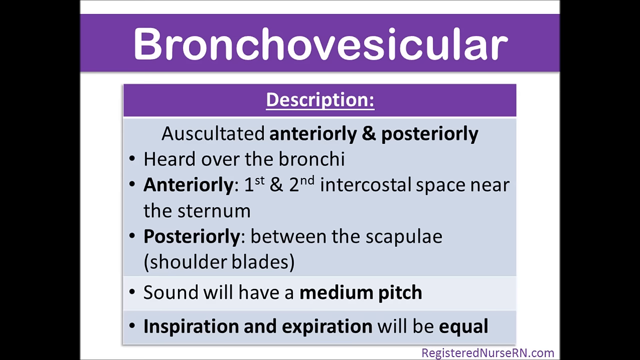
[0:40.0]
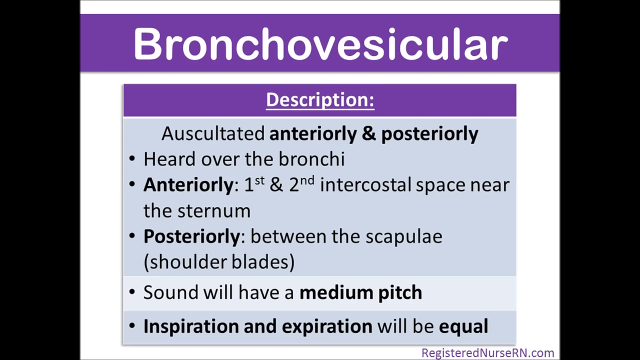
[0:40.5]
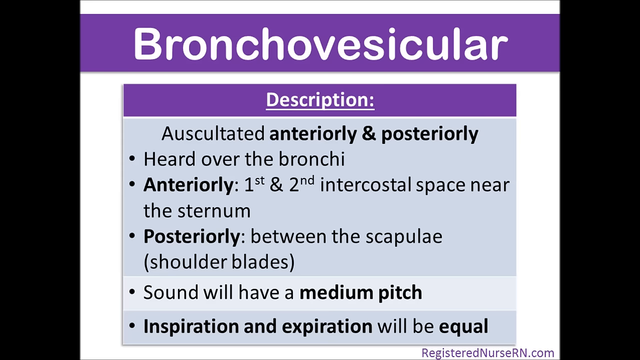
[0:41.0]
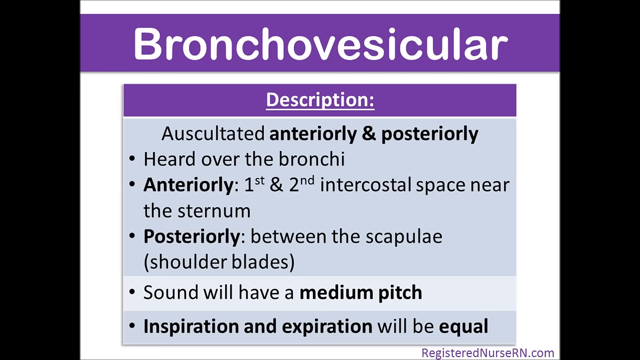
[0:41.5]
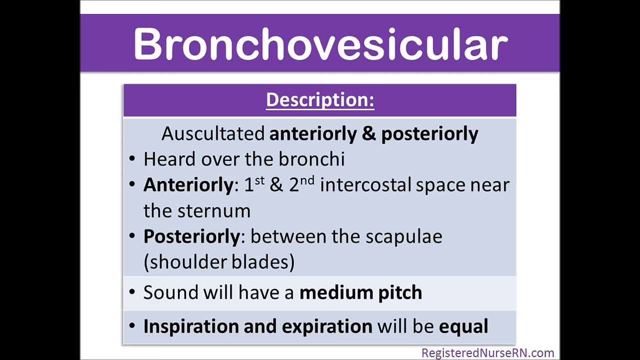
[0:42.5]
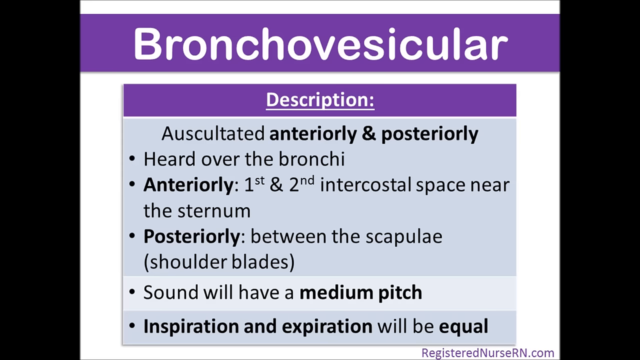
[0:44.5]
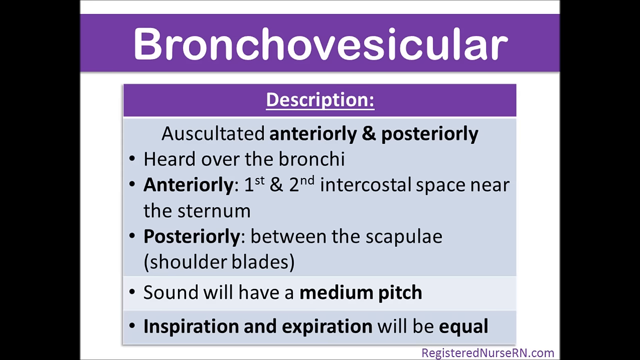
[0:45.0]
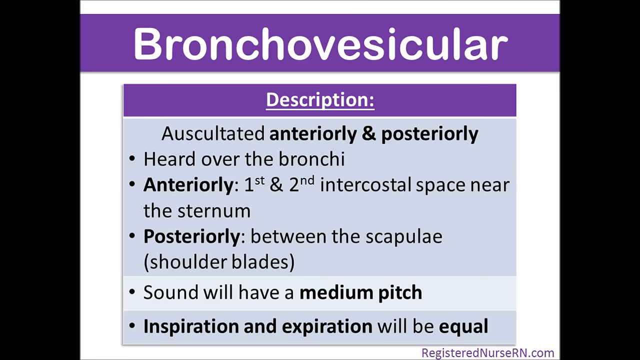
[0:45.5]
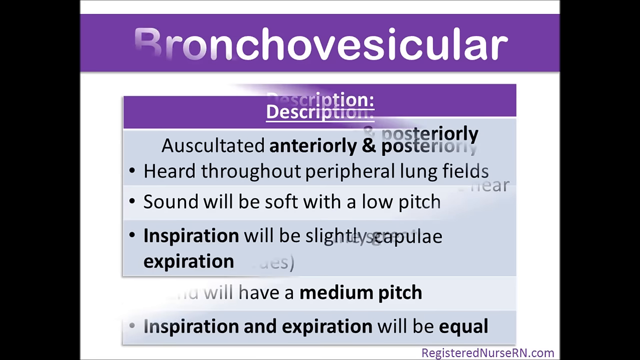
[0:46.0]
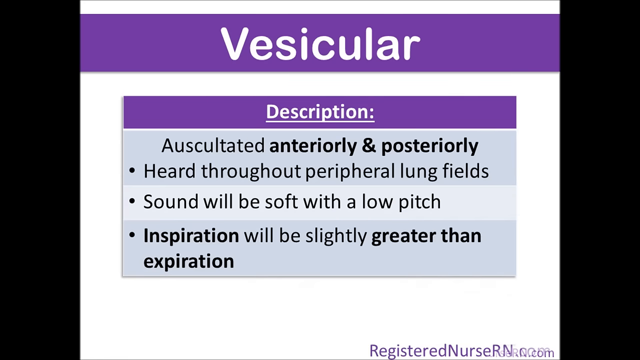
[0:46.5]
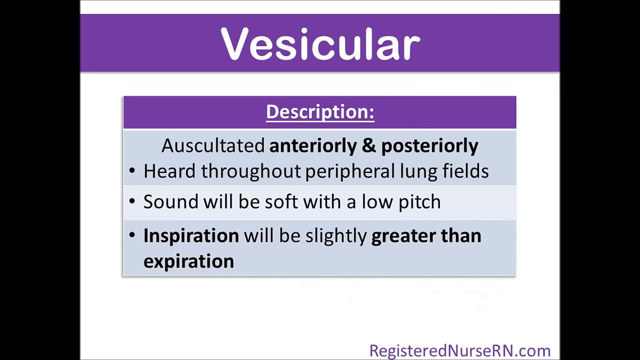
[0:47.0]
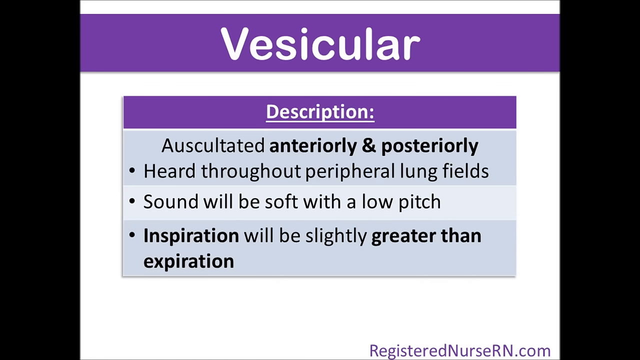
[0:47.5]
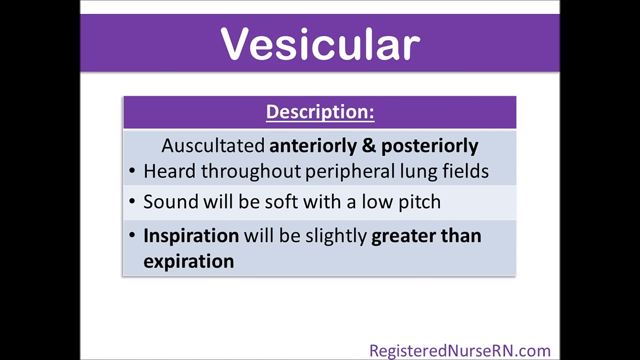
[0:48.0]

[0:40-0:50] The slide disappears and a new one comes in. This one apparently does not flip over; instead it looks like it is pulled in from the left with a kind of swoop. Its white-on-purple header at the top reads "Vesicular". It has the same table as before, with a white-on-purple, underlined "Description" header, and three rows of bullet points. The top row appears to be a light blue and the middle one an even lighter blue. The top row seems to contain a header reading "Auscultated anteriorly & posteriorly", as on the previous slide, with a bullet point right beneath it reading "Heard throughout peripheral lung fields". The next row's bullet reads "Sound will be soft with a low pitch", and the last reads "Inspiration will be slightly greater than expiration". A few words, such as "inspiration", are in bold. The slide holds for a while, with the registerednursern.com address still in the lower right.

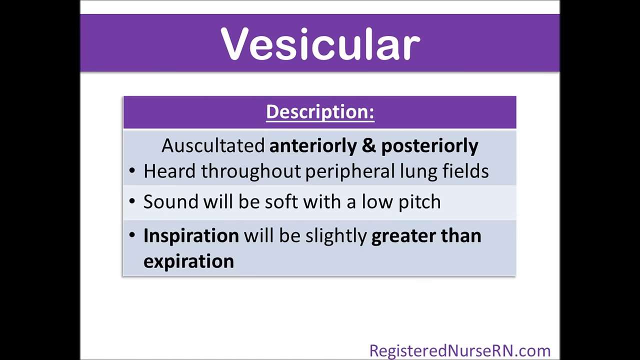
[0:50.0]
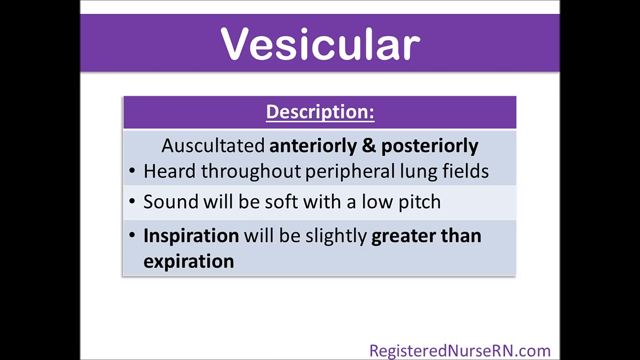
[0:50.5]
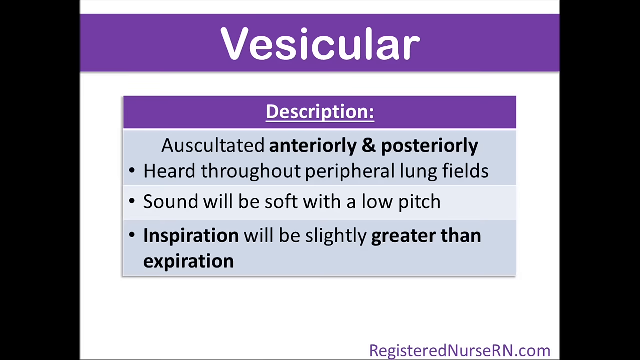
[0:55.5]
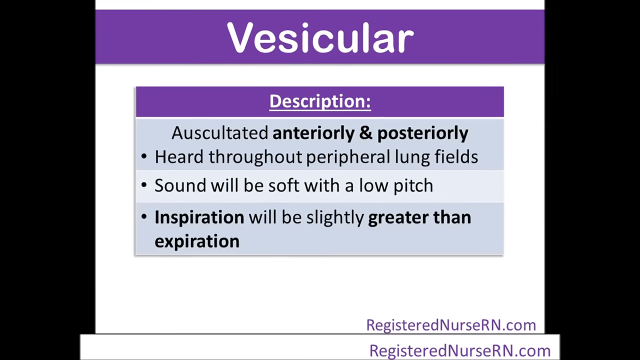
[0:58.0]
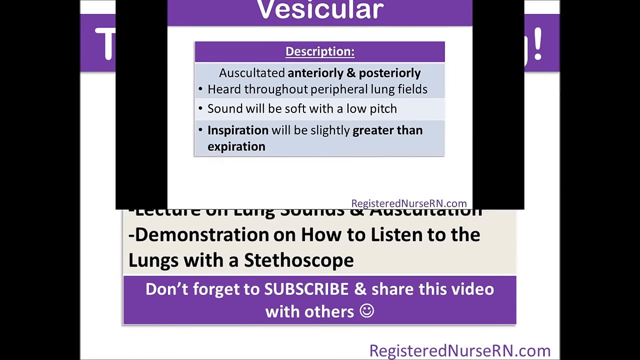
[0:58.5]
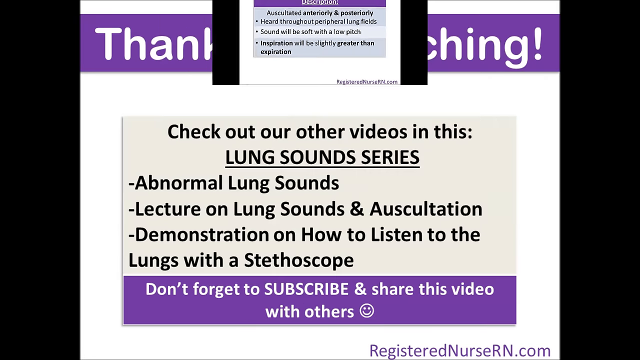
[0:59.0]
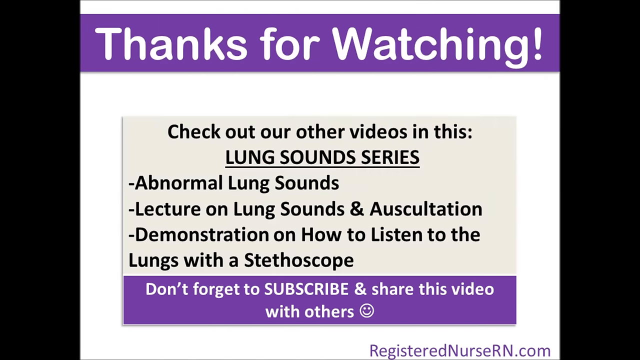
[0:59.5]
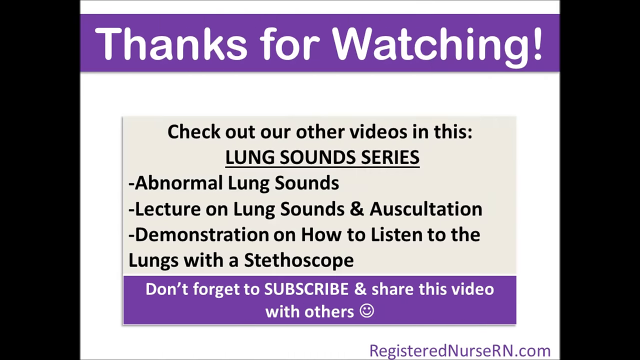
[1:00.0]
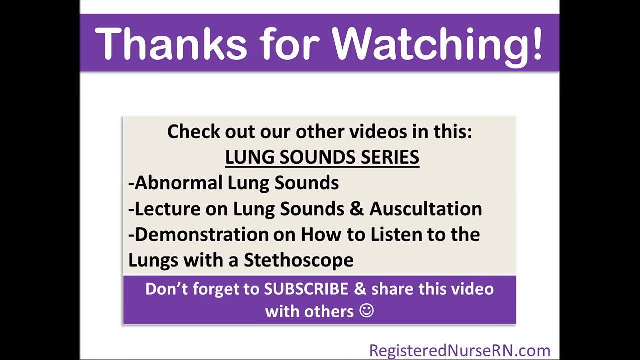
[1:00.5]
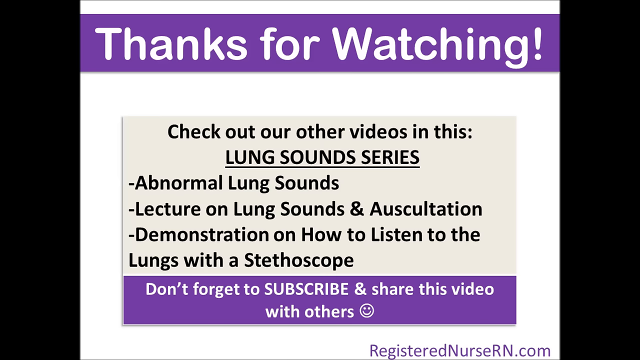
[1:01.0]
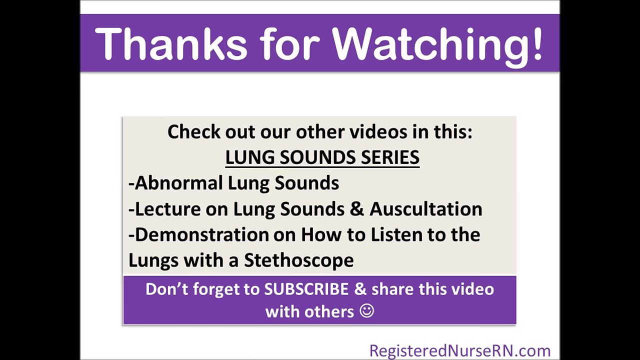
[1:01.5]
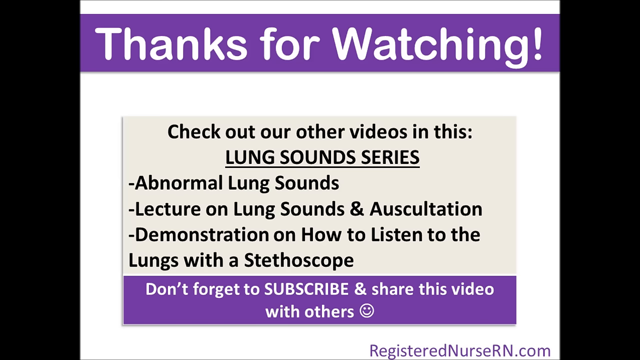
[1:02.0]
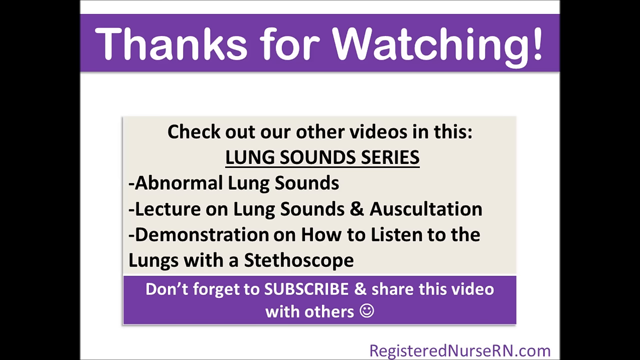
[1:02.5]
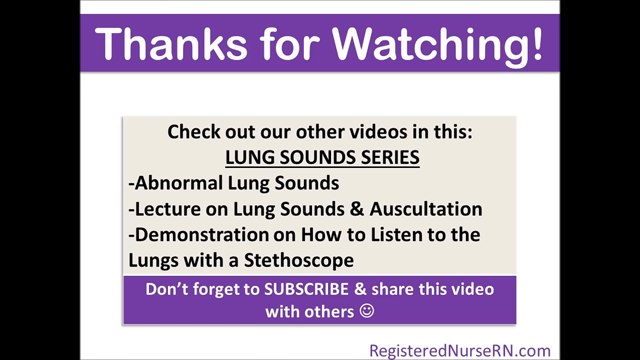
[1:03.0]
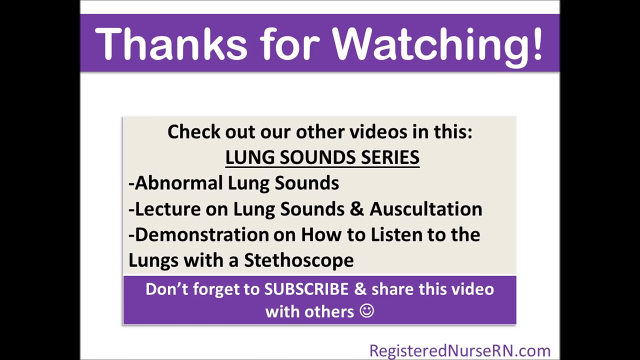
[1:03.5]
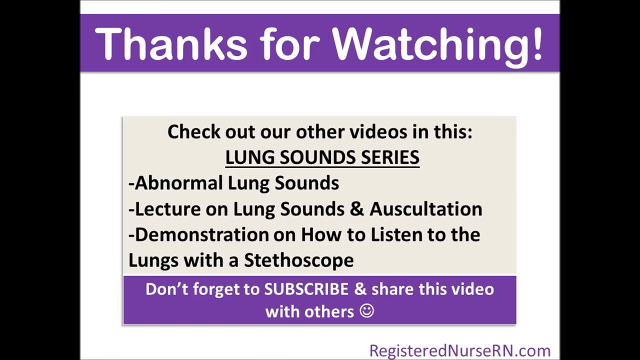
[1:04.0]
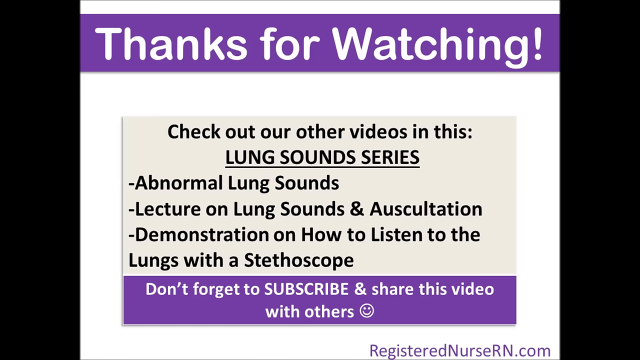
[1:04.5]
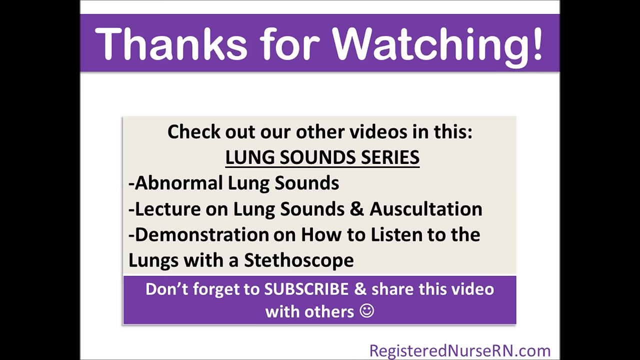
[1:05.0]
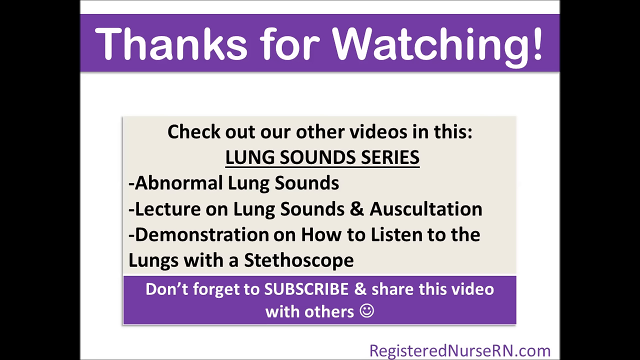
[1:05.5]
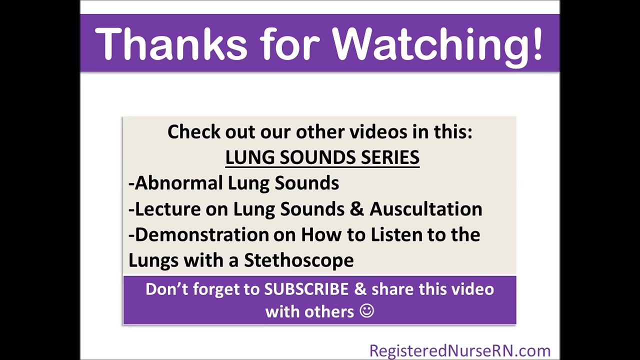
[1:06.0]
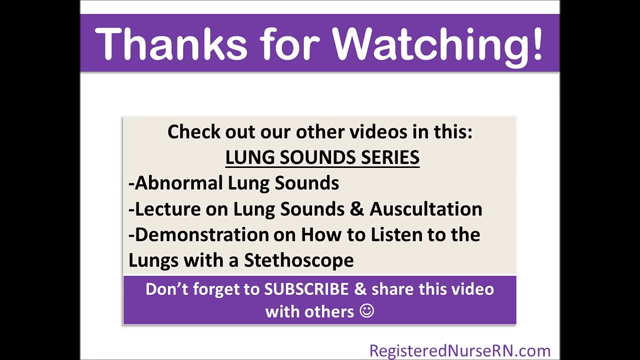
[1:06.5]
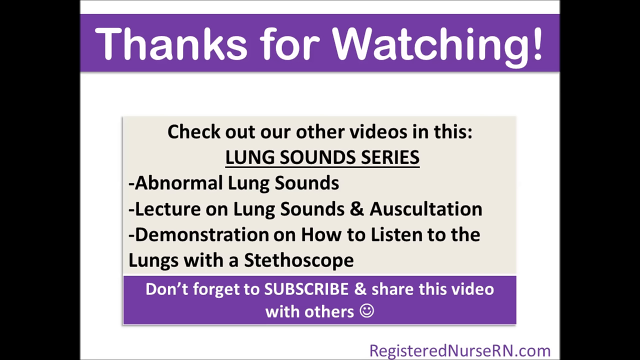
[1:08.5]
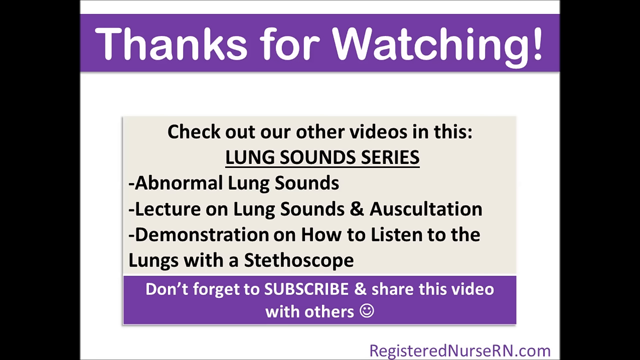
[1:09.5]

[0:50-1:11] The same slide remains on screen. The borders of the video are black on both sides because the slides are not as wide as the video frame. The slide then gets smaller and smaller and disappears toward the top. The last slide has a white-on-purple header at the top reading "Thanks for watching!", with an exclamation point. A box in the middle has a top section with a tan background reading "Check out our other videos in this lung sound series", followed by three hyphenated items describing the videos; the top one is about abnormal lung sounds. Beneath that is a lower field with a purple background and white text reading "Don't forget to SUBSCRIBE & share this video with others.", with "SUBSCRIBE" in all caps, an ampersand for "and", and a plain white smiley face at the end rather than a proper emoji. The slide holds for a while, with the registeredNurseRN.com logo still in the lower right.